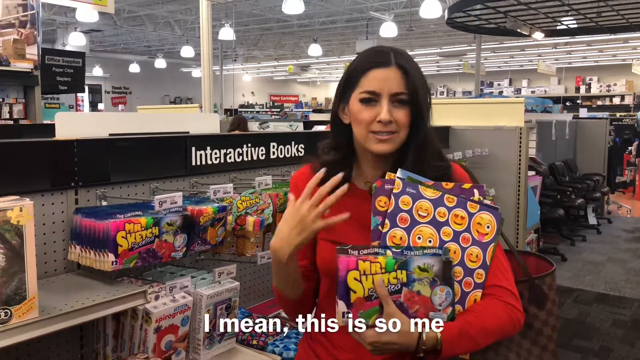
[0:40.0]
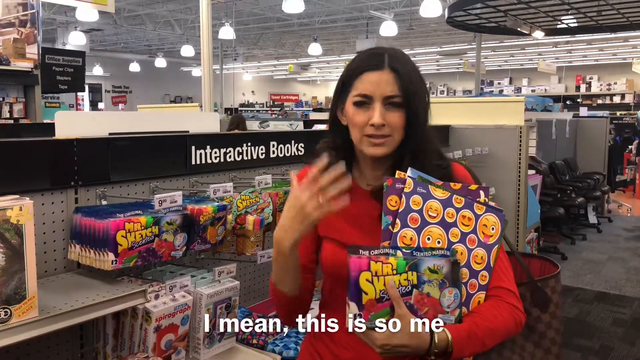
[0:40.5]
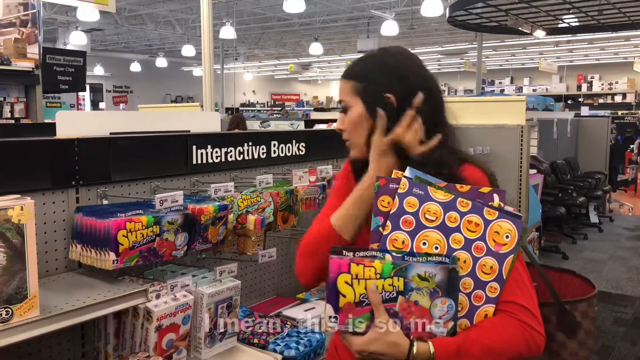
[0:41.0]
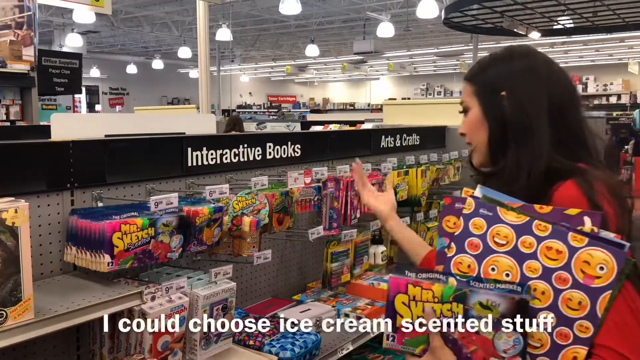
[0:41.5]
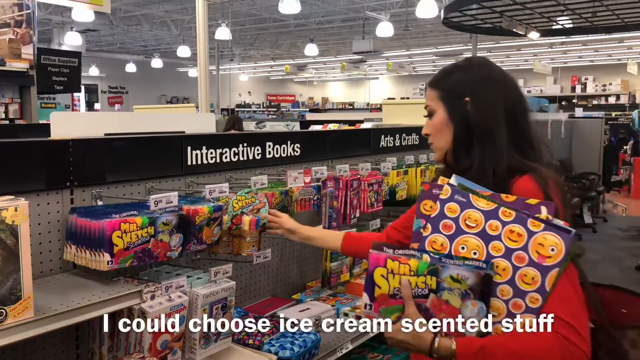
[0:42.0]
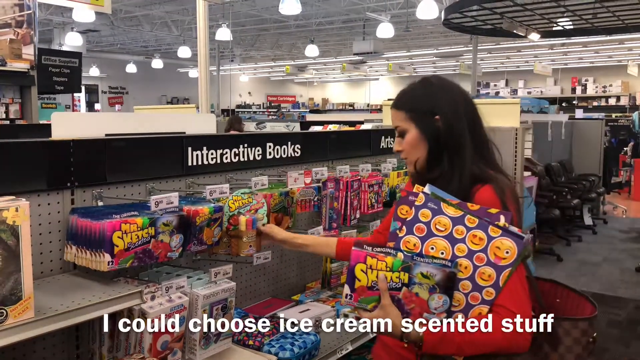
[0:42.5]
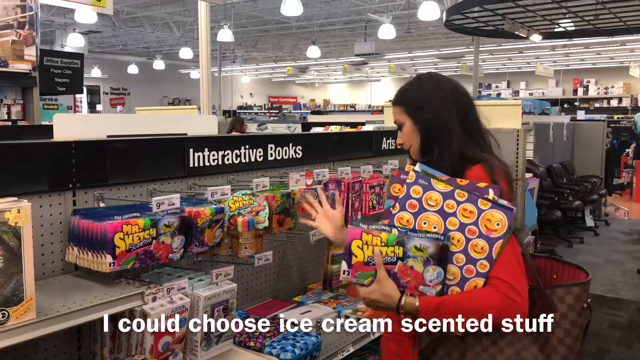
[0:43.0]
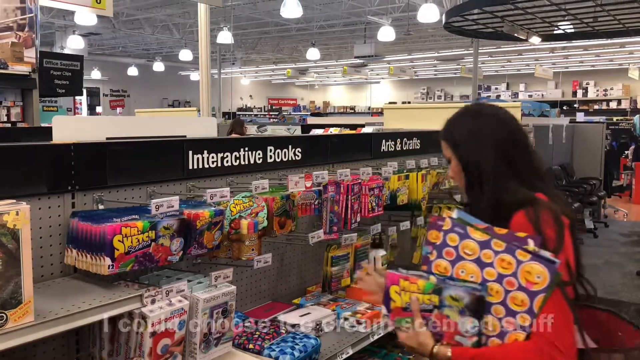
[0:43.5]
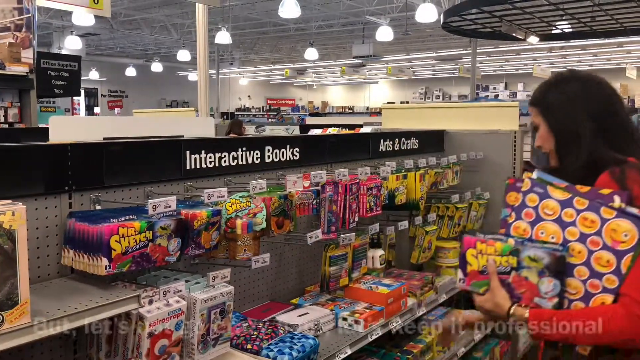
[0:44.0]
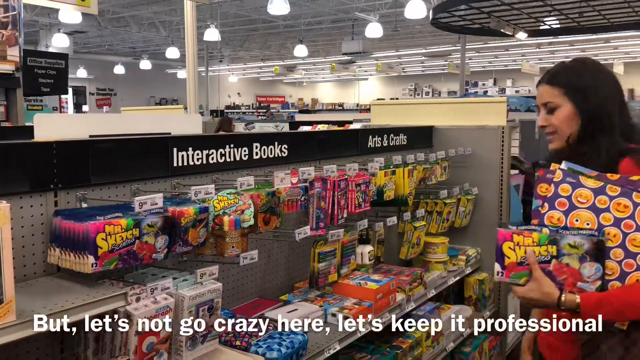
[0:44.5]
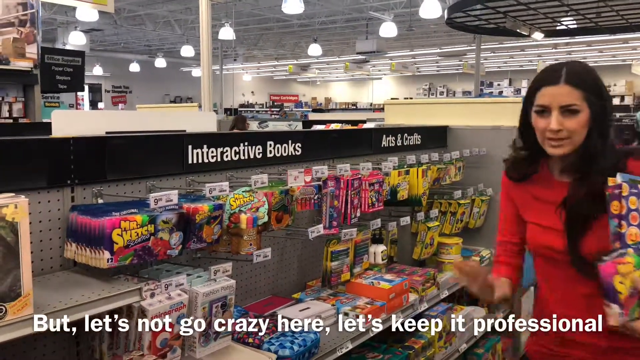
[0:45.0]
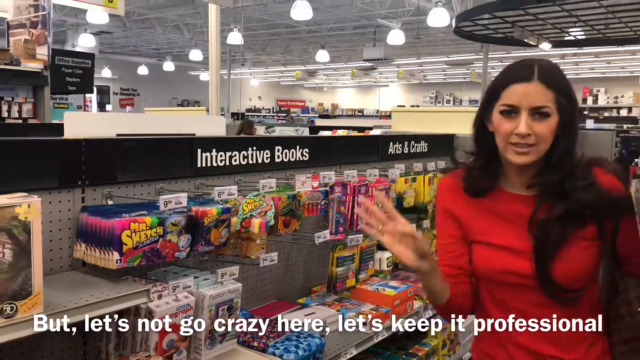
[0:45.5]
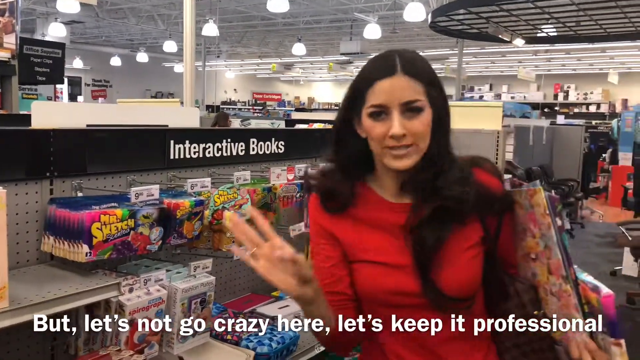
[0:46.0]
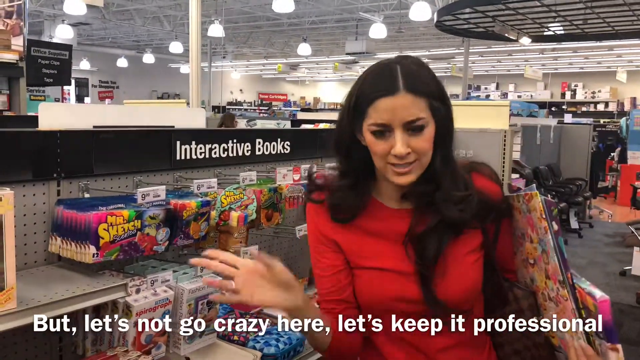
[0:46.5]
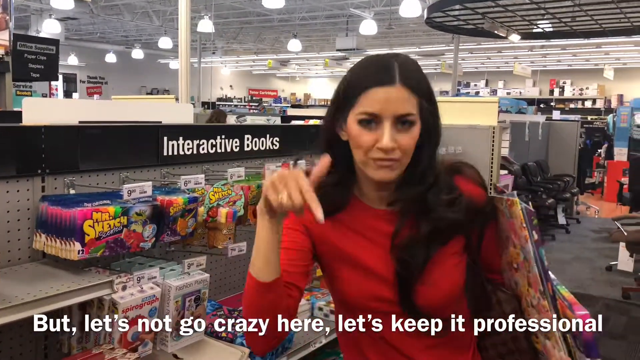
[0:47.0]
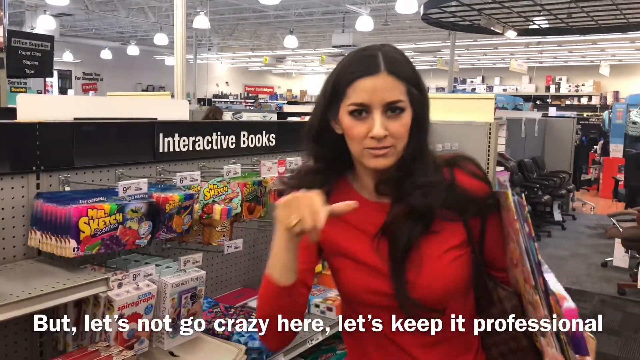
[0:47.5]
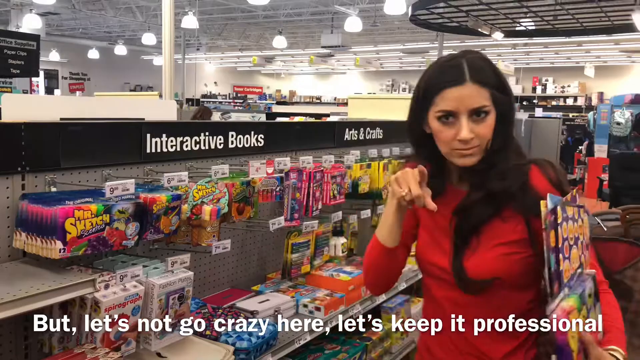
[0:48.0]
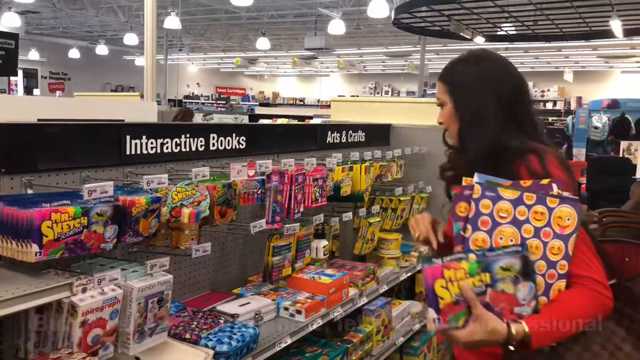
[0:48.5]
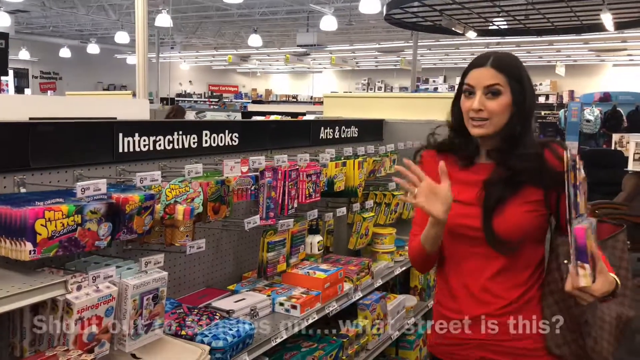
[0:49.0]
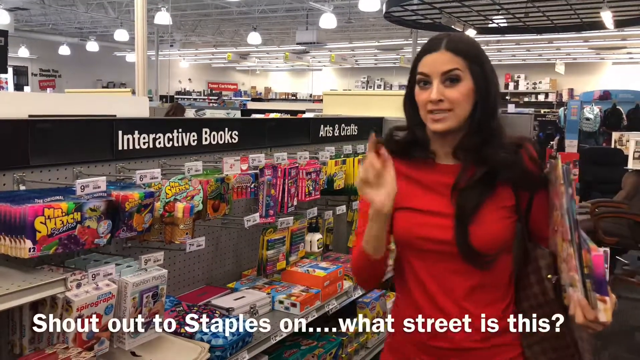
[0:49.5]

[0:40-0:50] The woman in the red shirt is still standing in front of the display that says "Interactive Books," holding some of the products in her hands and talking about them to the camera, waving her hands a lot as she speaks. Subtitles show what she says, including "I mean this is so me. I could choose ice cream scented stuff. Let's not go crazy. Keep it professional. Shout out to Staples, on what street is this?" With its red and white signage and stationery products, the store appears to be a Staples.